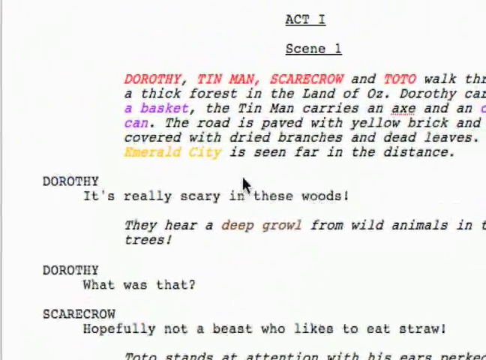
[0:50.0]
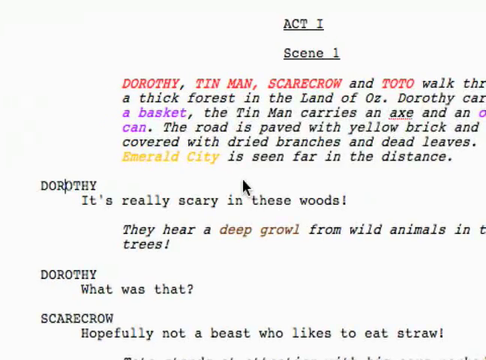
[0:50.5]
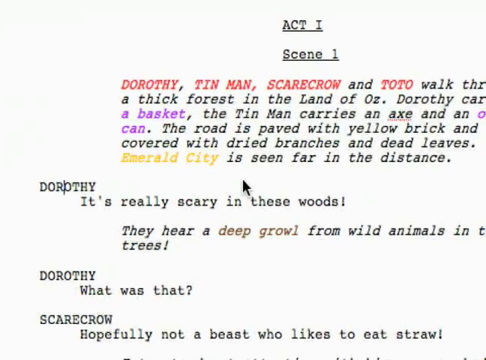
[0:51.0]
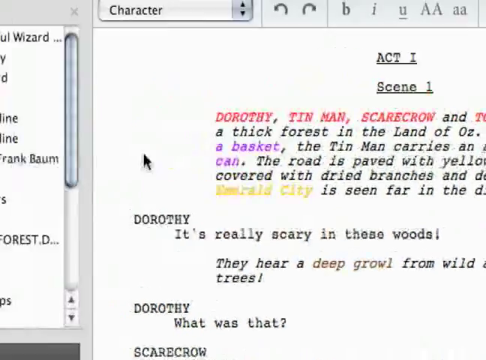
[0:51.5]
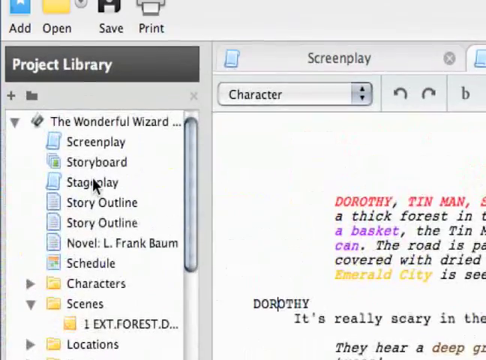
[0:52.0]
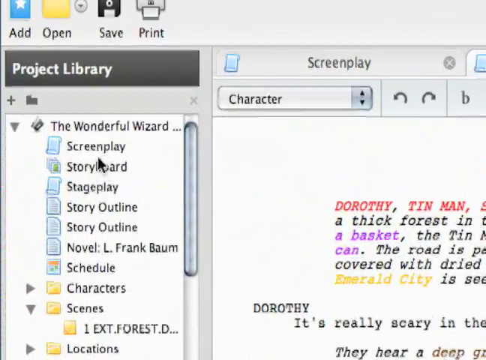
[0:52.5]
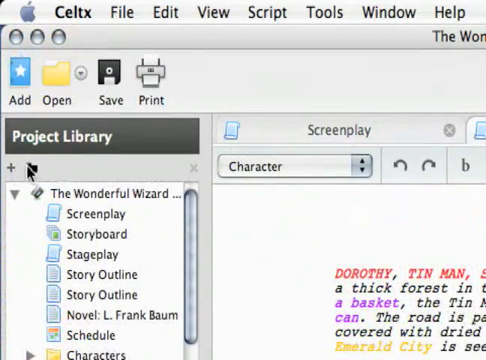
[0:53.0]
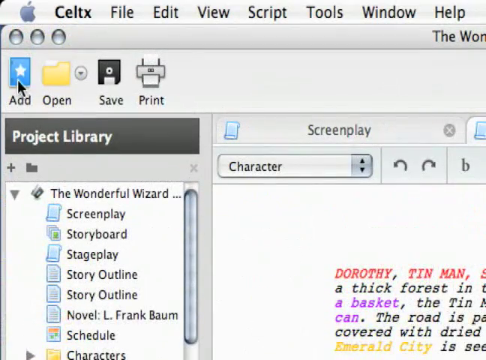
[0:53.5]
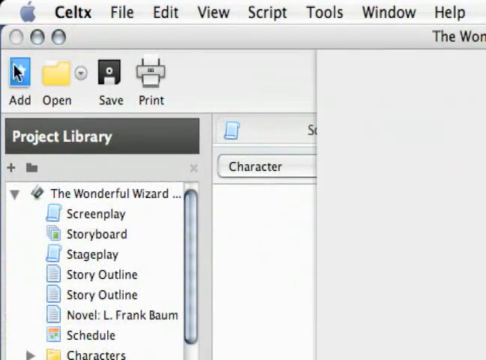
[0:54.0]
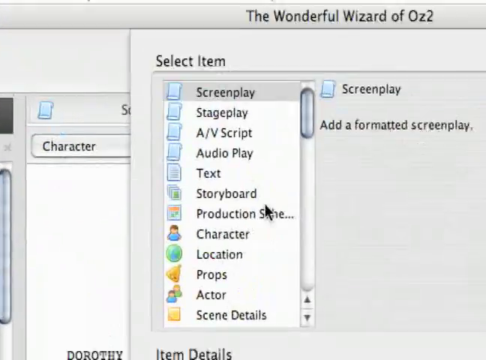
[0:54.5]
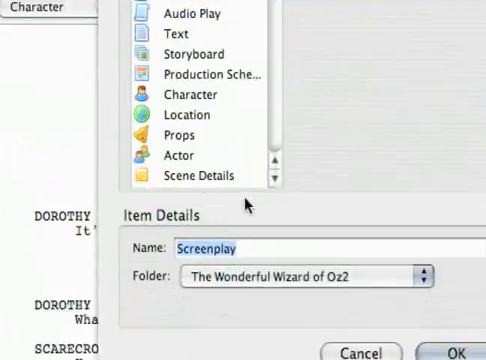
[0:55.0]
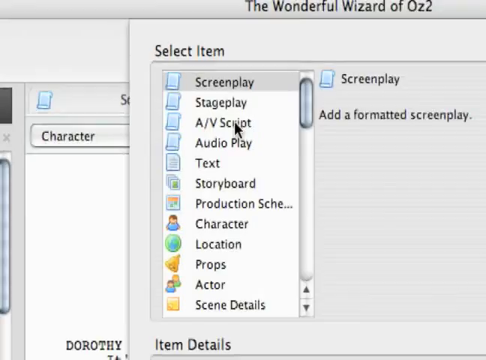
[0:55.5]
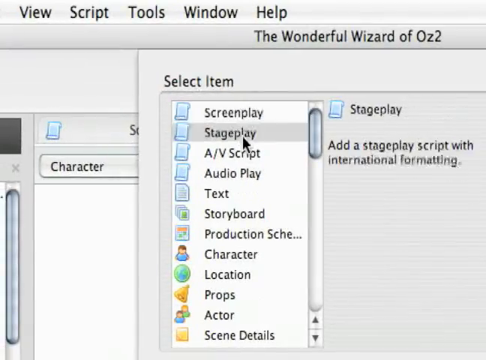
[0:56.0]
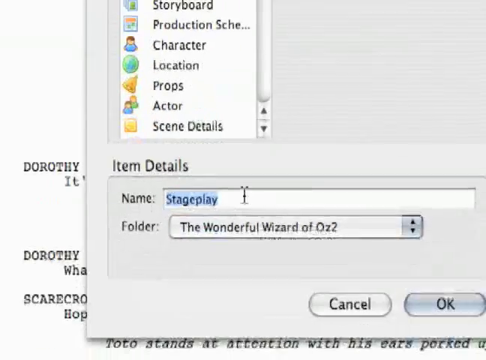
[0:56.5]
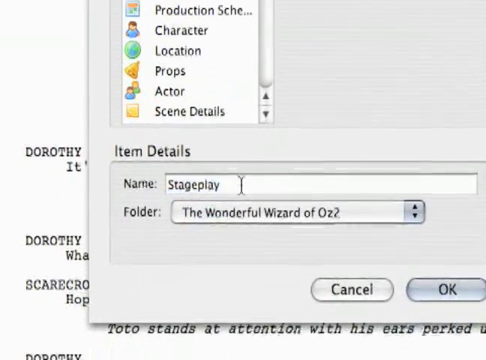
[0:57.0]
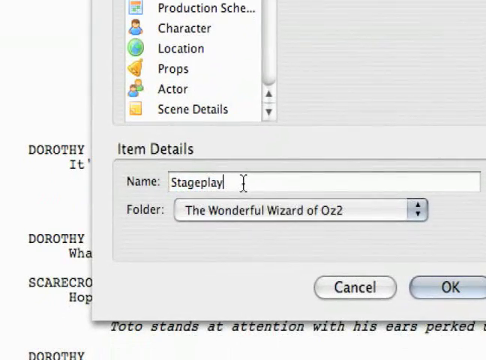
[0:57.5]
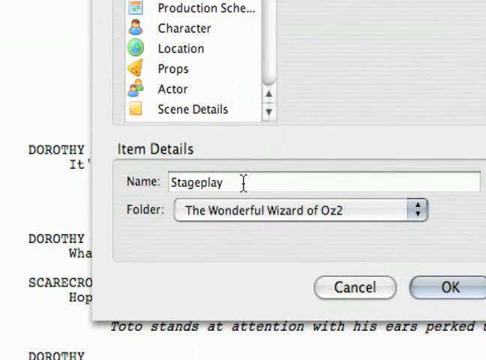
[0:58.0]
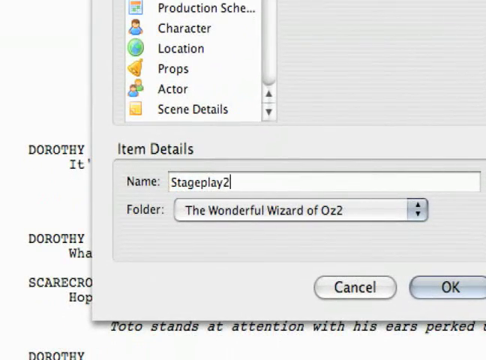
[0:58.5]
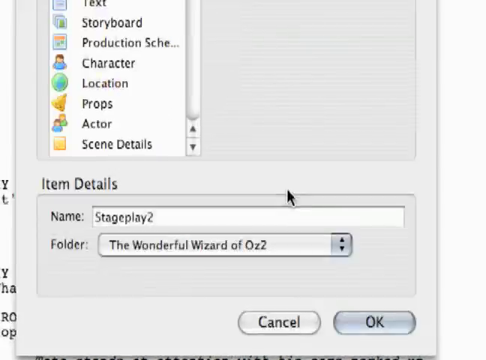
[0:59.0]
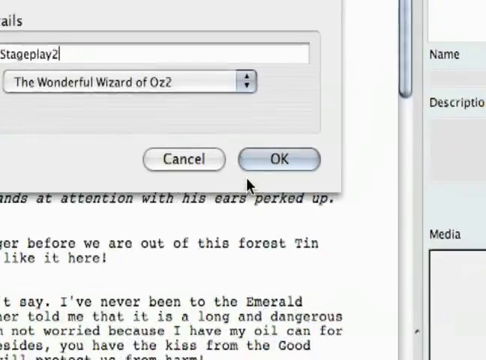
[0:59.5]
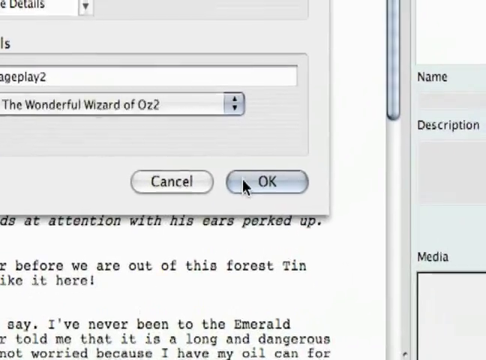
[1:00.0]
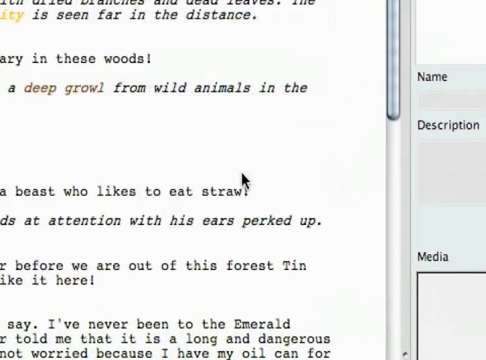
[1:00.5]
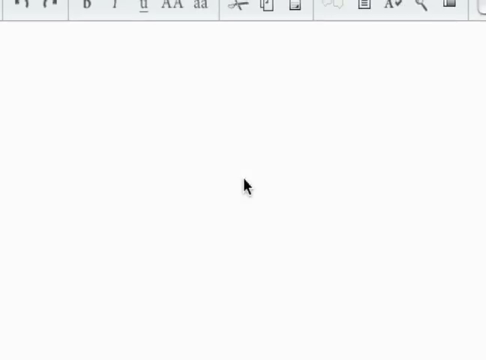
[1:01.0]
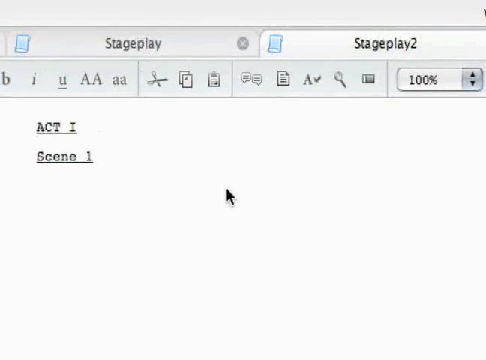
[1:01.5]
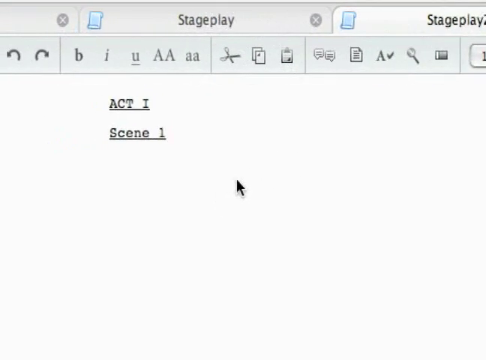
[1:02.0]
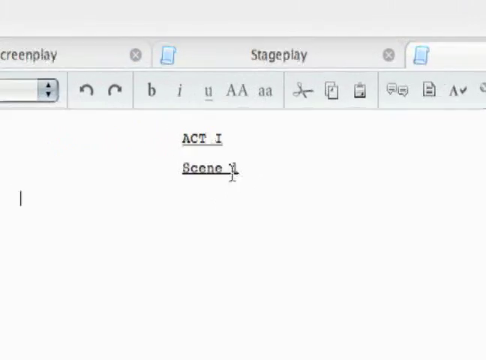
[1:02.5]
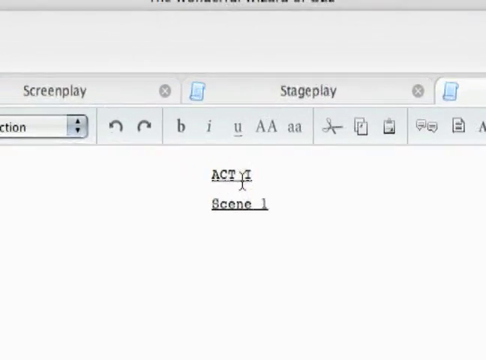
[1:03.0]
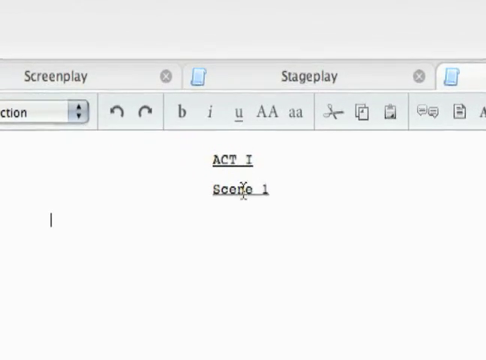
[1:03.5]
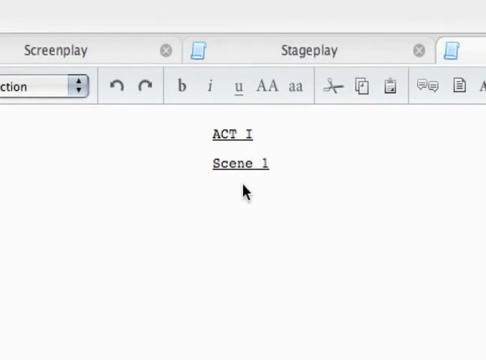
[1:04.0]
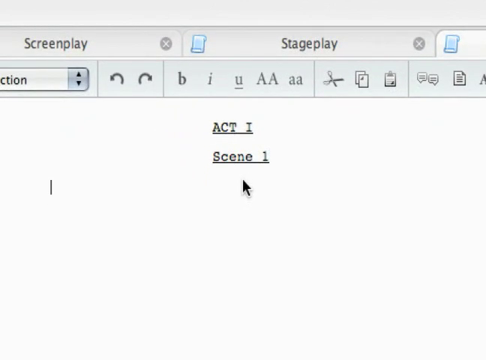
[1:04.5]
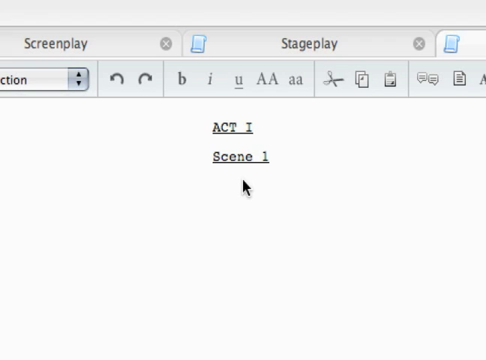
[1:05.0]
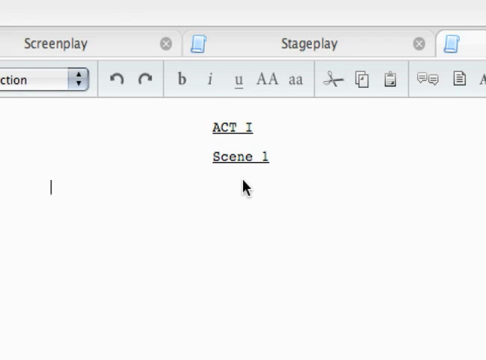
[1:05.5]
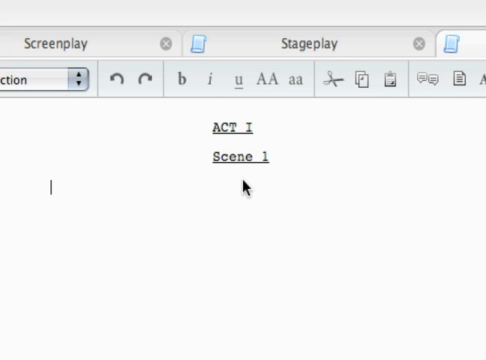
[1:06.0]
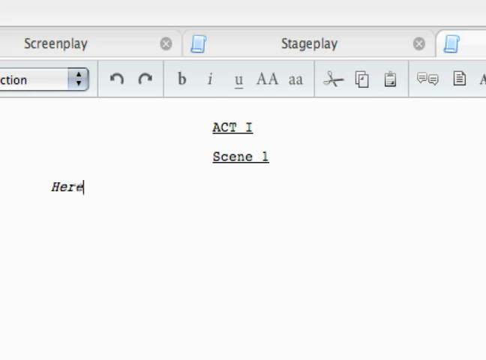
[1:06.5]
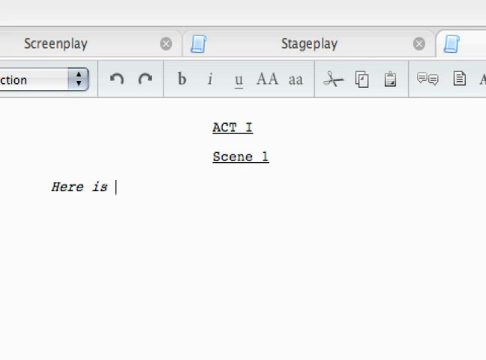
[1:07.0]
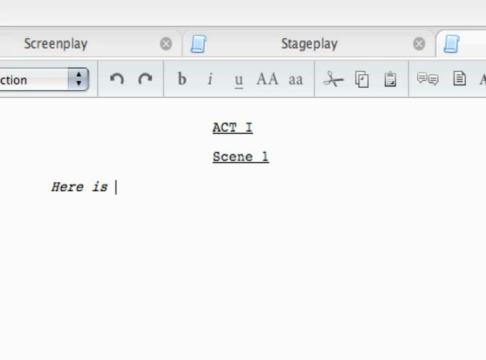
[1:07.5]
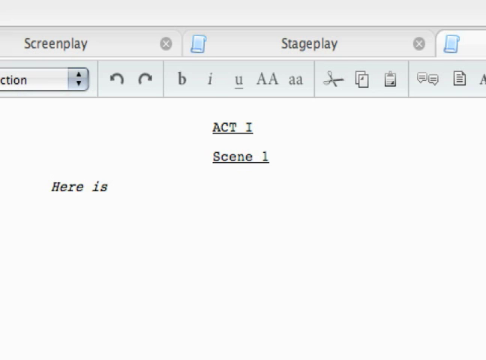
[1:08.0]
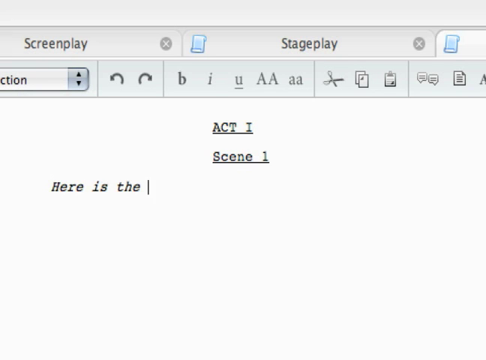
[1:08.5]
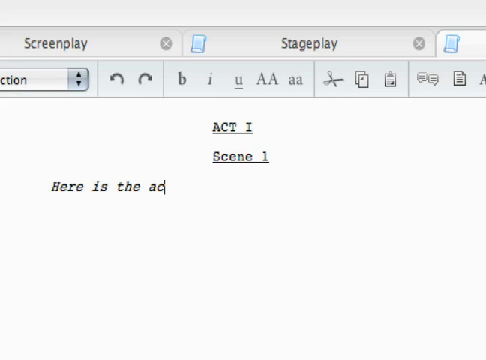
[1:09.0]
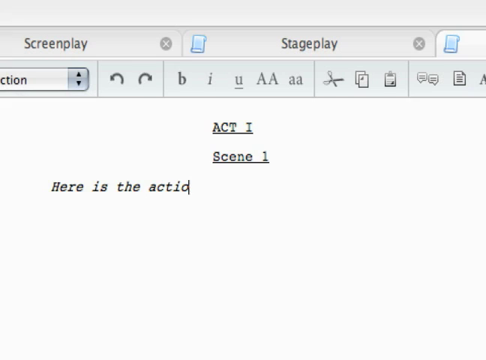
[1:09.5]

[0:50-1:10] The whole screen vibrates slightly, and the cursor and screen move to the upper left corner. The cursor hovers over the various items in the document list, such as screenplay, storyboard, stageplay, story outline, novel, L. Frank Baum, schedule, characters and scenes, then moves up slightly and stops over a black rectangle above the list reading "project library" in white. It moves up to the Add button, and the word "add" briefly pops up in a yellow note. Another window opens to the right, and the camera and cursor both move right. The cursor moves rapidly to the item stageplay, then down to the "item details" section at the bottom of the window, clicks the name "stageplay", which is briefly highlighted in blue, and adds a 2 to the end of it. It clicks OK and the window disappears. A new document, stageplay2, opens in a new tab to the right of the original tab labelled stageplay. It is blank except for "act 1 scene 1" at the top, both underlined. The cursor moves up to "act 1 scene 1" and down past it, and typing begins: "here is the action".